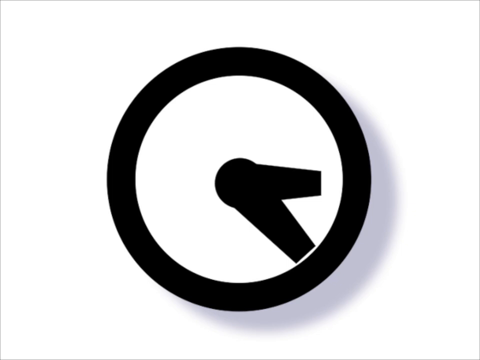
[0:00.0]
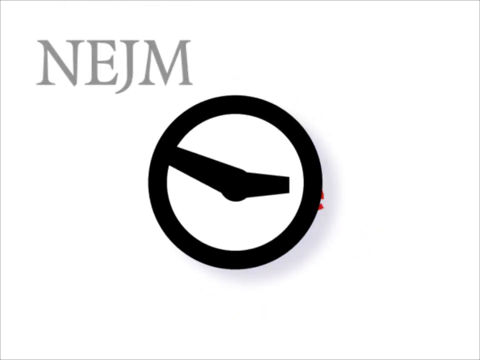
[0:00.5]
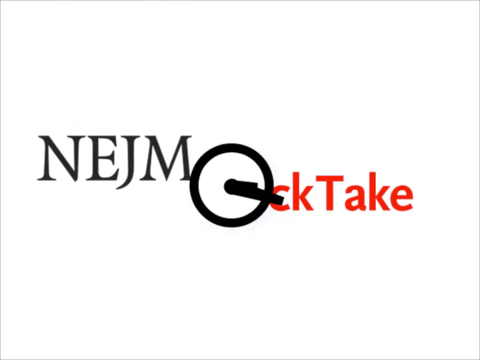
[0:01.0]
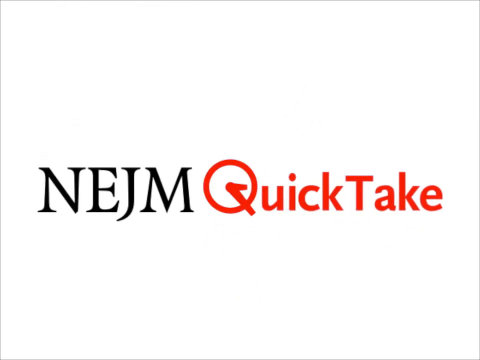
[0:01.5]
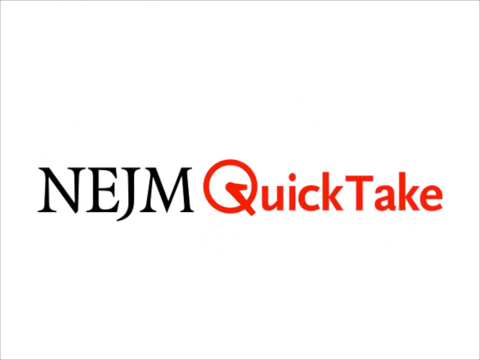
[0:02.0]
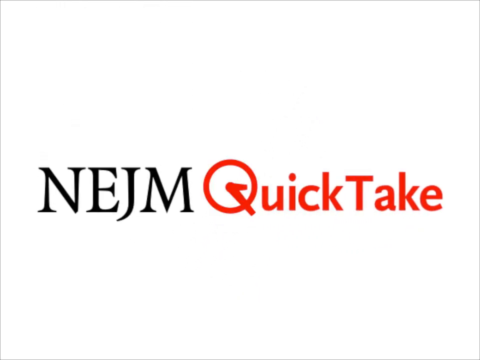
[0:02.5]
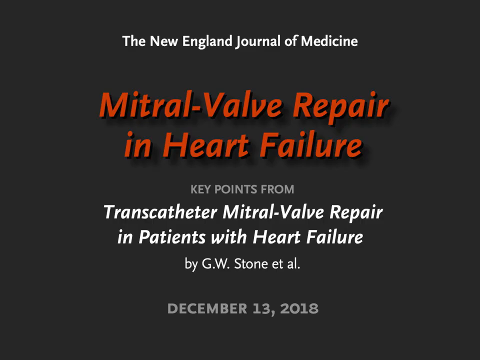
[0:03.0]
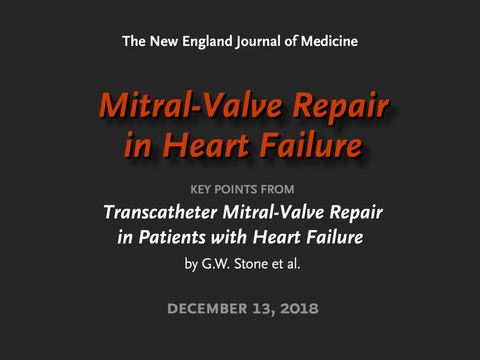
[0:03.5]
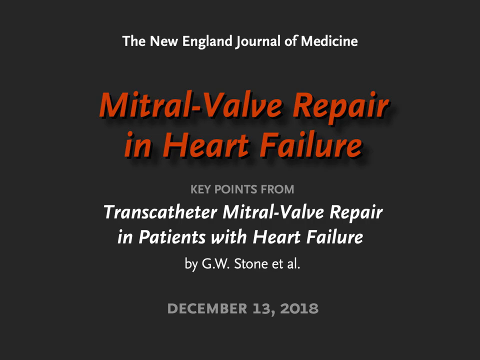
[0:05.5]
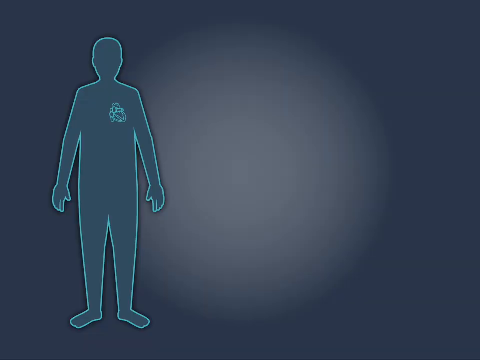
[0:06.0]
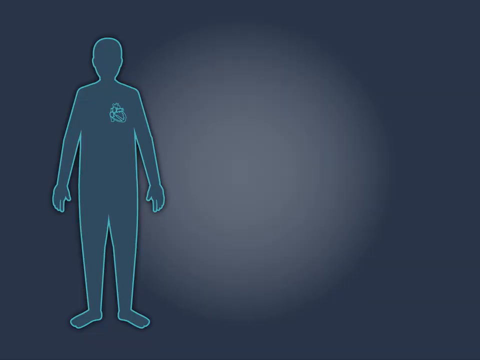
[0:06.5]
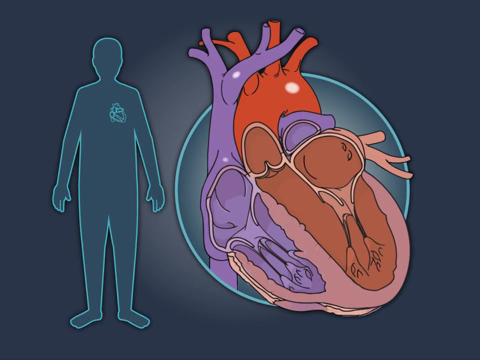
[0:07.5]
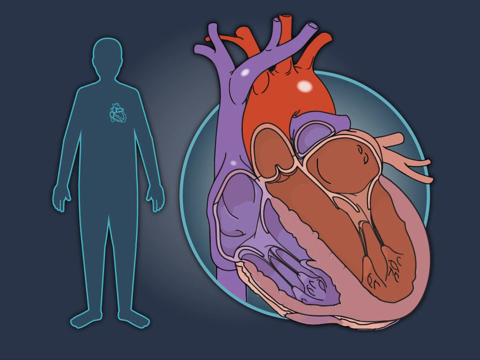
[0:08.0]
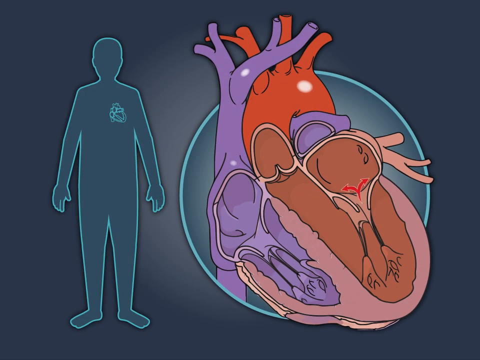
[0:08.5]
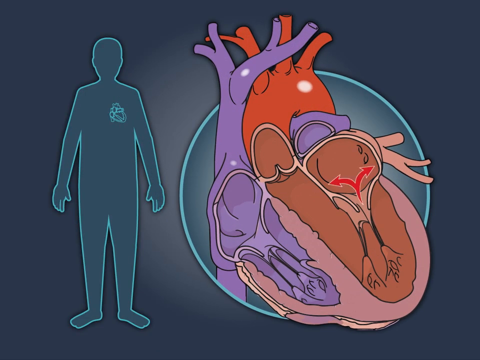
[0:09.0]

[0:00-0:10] A cartoon wall clock opens the video, showing a time of approximately 3:20. The clock is drawn in black and white: its outer circular part is black, the inside is white, and the hands are black. The clock shrinks as words pop onto the screen reading "NEJM"; the clock turns into the Q of "quick take", so the screen reads "NEJM quick take", with "NEJM" in black and "quick take" in red. The video then advances to a gray screen where words appear. At the very top it reads "the New England Journal of Medicine". Beneath that, in red, it reads "mitral valve repair and heart failure". Below that, in all capitals, is "key points from", followed by "transcatheter mitral valve repair in patients with heart failure". Underneath is the name "G.W. Stone", and at the very bottom is the date "December 13th, 2018". Finally, a silhouette of a human drawn in blue appears with a depiction of a heart, enlarged next to the silhouette, showing the different parts of the heart.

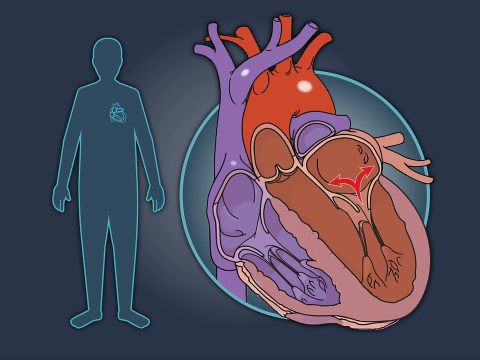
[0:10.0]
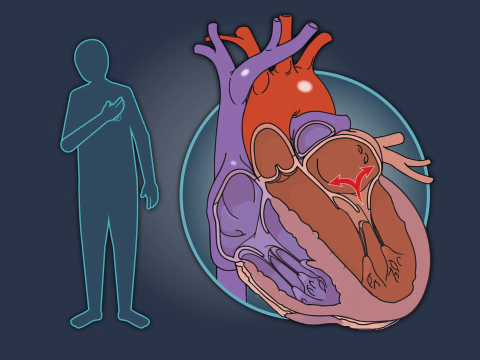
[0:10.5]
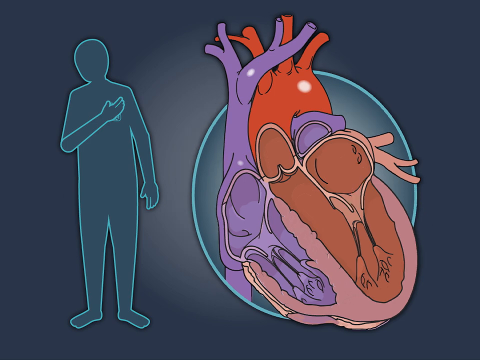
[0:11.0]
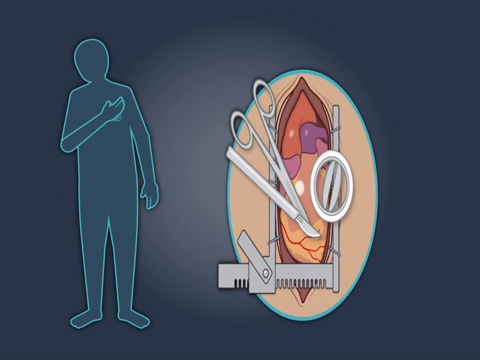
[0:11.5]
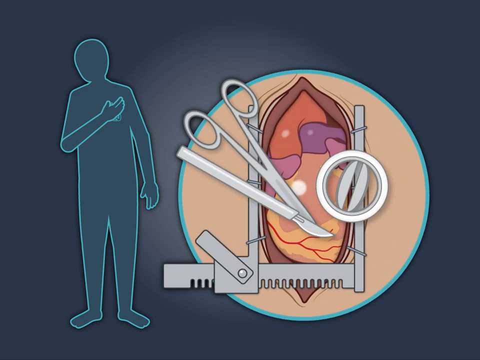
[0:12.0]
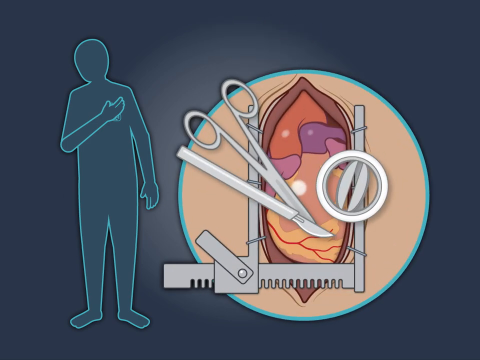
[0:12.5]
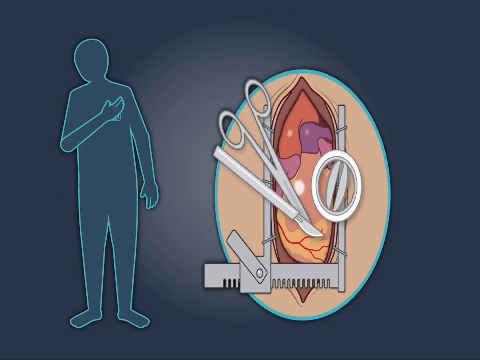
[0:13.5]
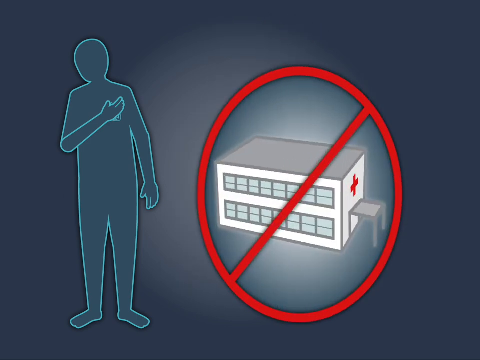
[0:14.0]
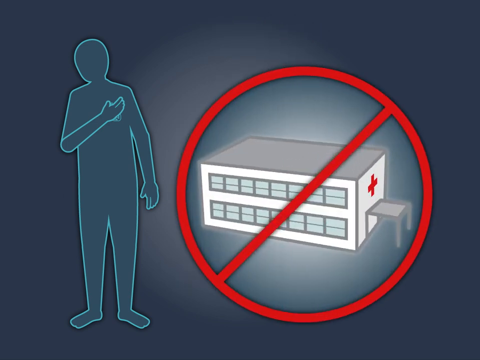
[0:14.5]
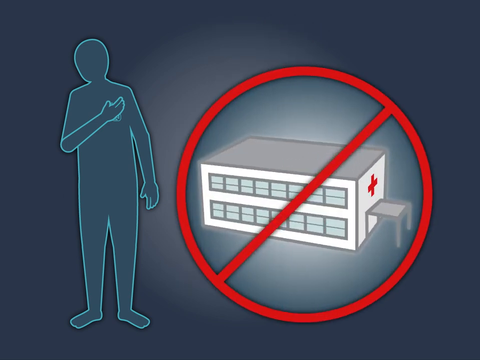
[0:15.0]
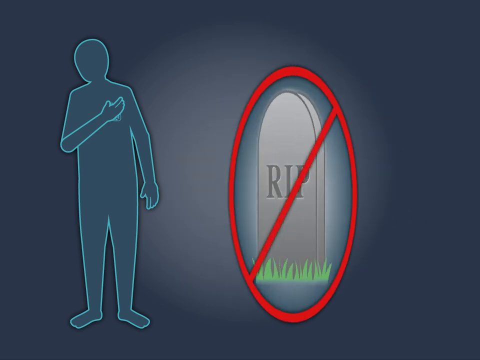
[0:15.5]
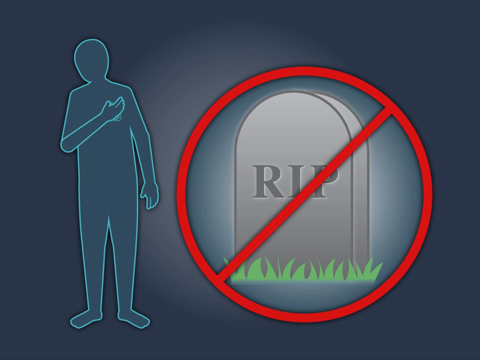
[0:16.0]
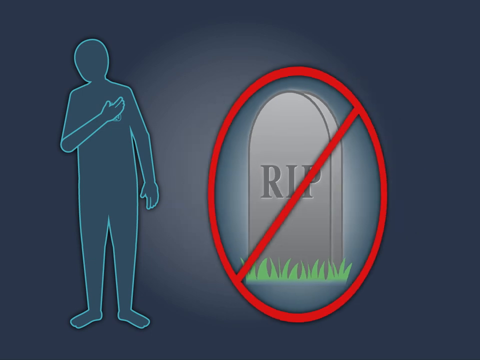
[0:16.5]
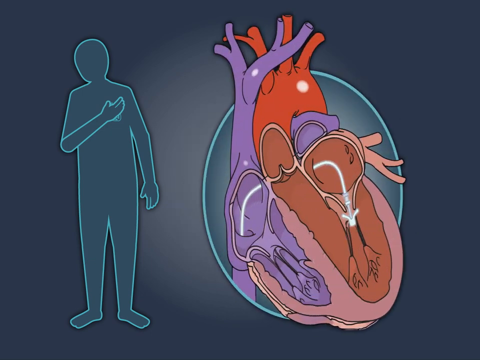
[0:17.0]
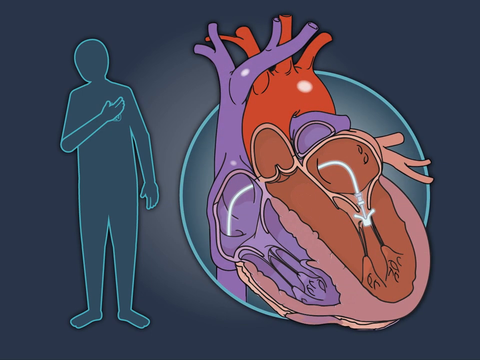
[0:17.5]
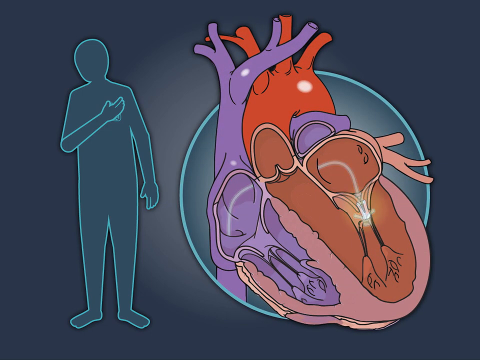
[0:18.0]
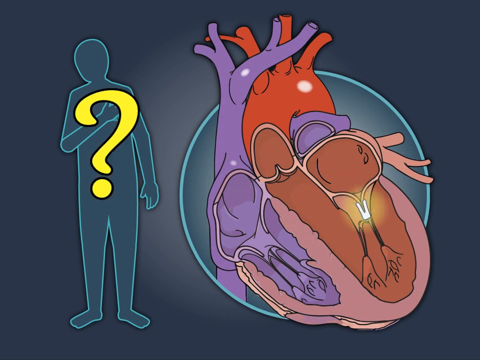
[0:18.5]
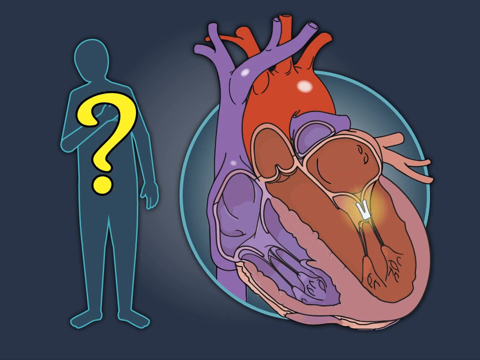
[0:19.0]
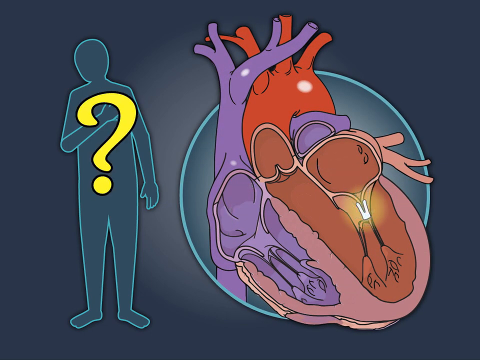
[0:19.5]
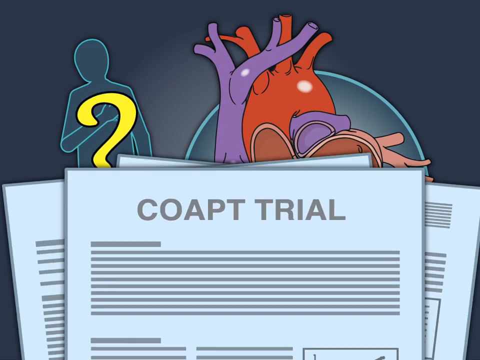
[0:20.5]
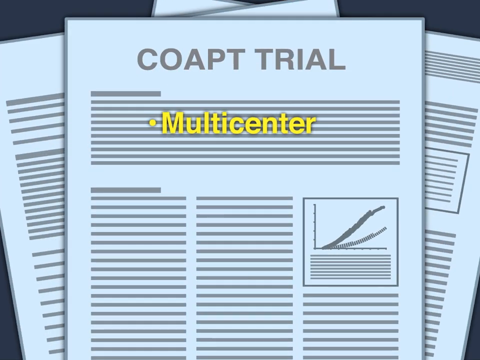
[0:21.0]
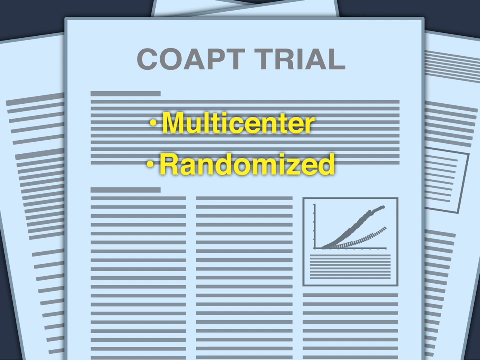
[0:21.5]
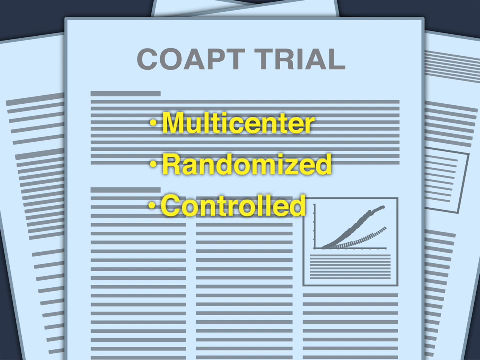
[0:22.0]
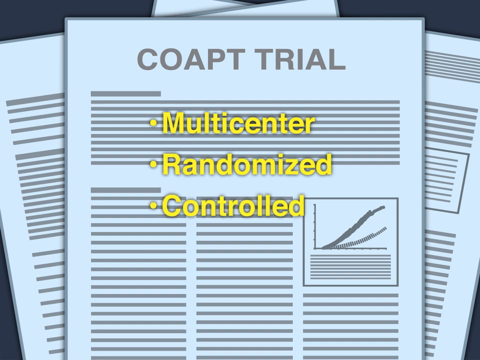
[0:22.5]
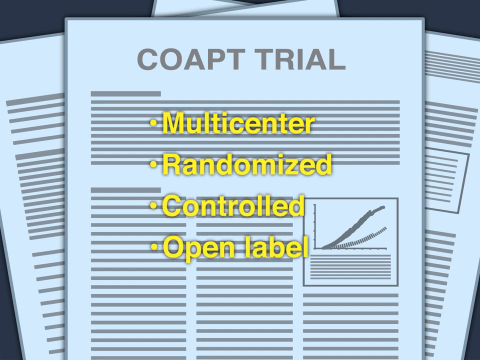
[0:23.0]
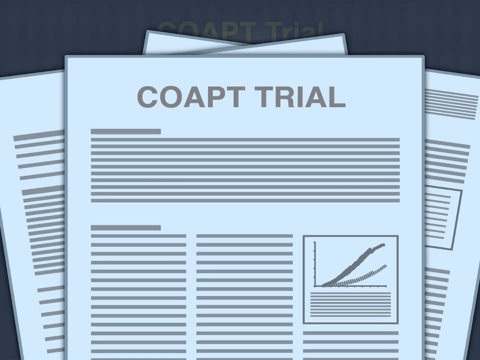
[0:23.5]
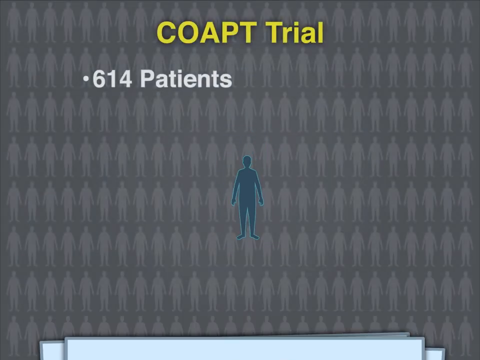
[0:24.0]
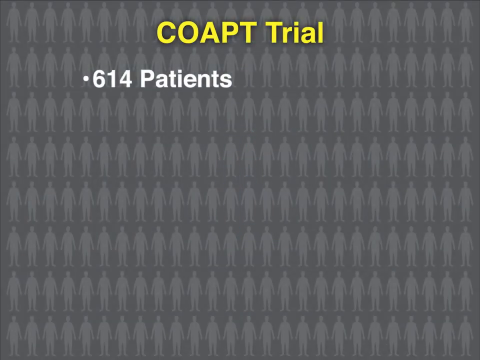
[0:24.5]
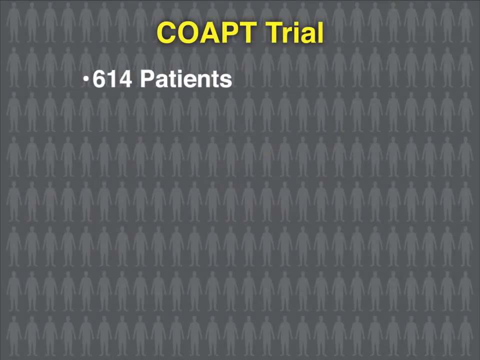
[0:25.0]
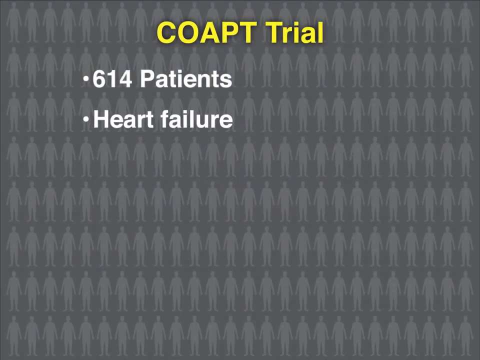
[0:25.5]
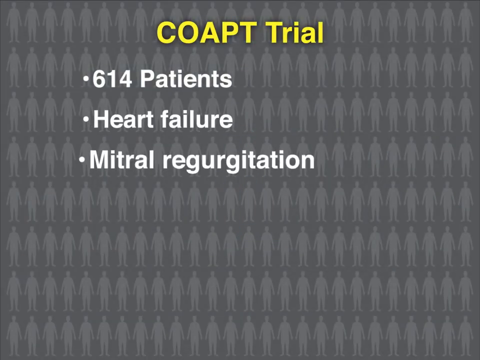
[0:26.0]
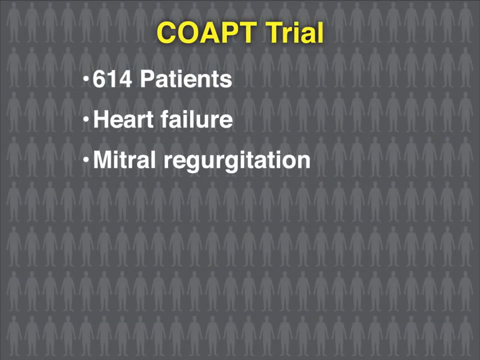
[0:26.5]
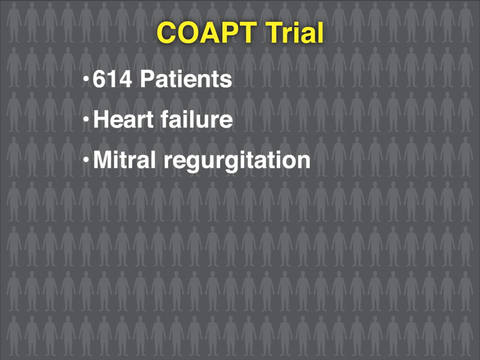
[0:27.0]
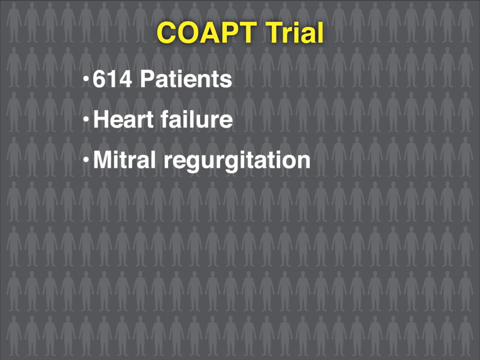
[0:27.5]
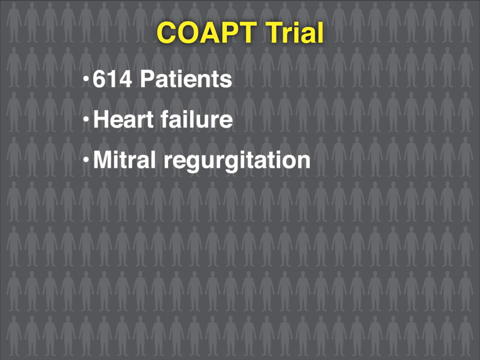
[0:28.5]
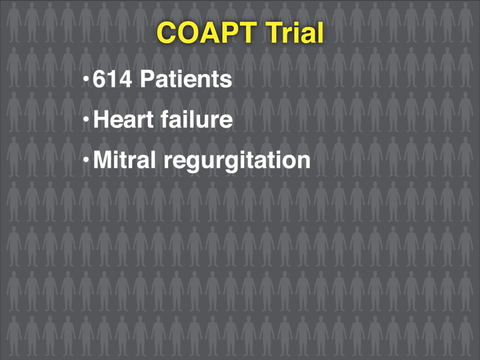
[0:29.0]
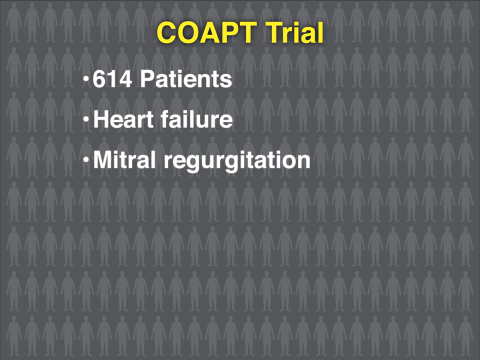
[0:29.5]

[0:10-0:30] A silhouette of a human, drawn in blue, has only its heart drawn on it. The heart is also shown enlarged right next to the silhouette as a cartoon in multiple colors, red, purple and brown, giving an up-close view of all its different parts. Next, the silhouette grips his heart, and to the right is a cartoon heart that may be under distress and in need of medical attention. A medical tool is shown over the heart, seemingly to indicate that a procedure was done to it.